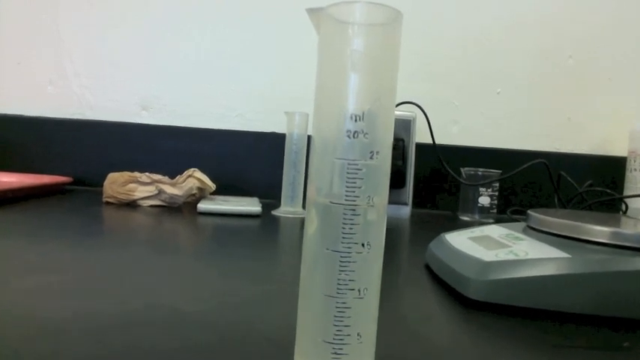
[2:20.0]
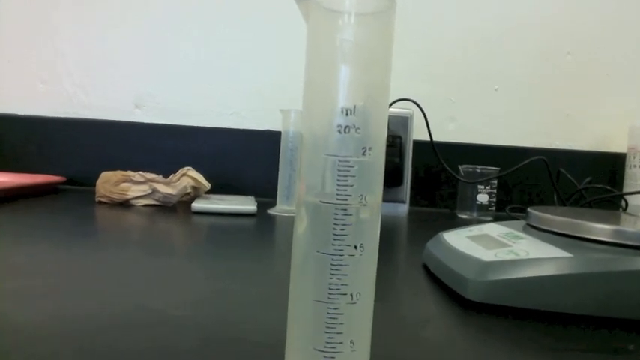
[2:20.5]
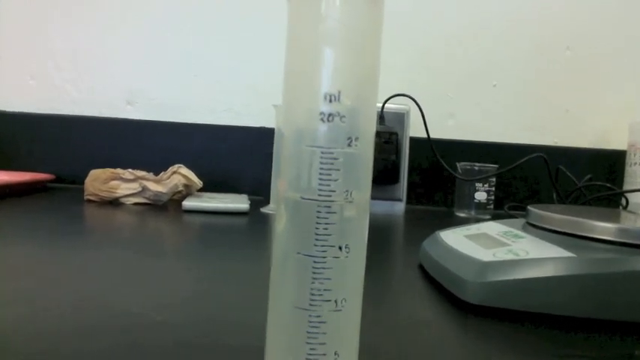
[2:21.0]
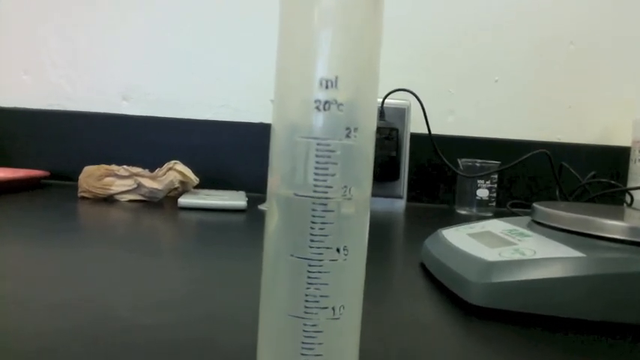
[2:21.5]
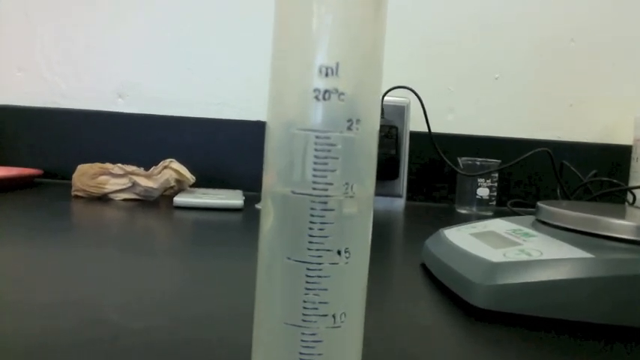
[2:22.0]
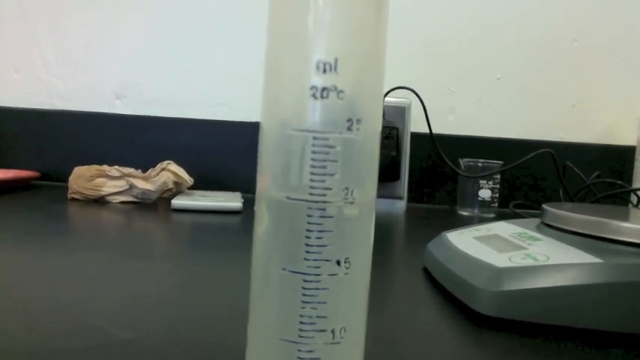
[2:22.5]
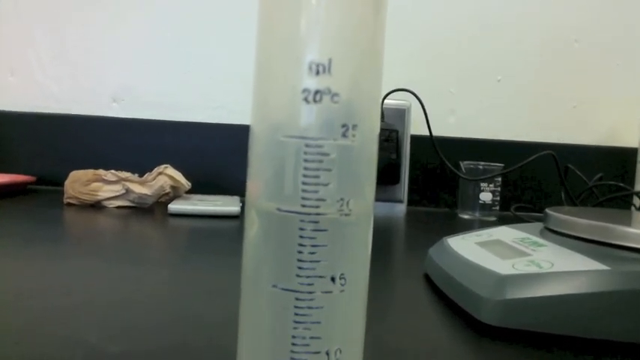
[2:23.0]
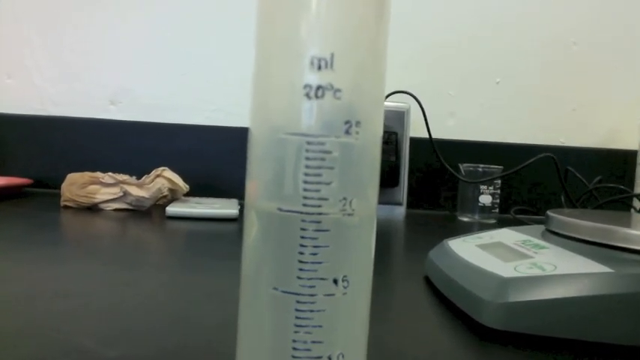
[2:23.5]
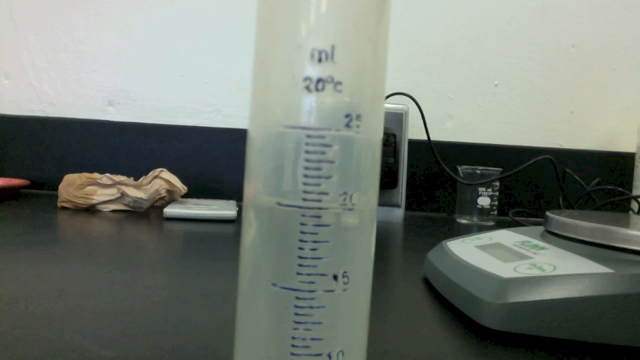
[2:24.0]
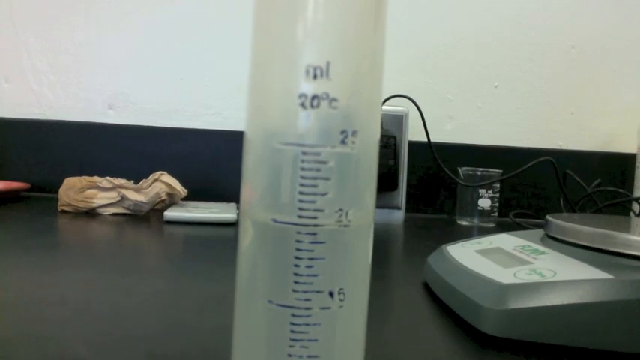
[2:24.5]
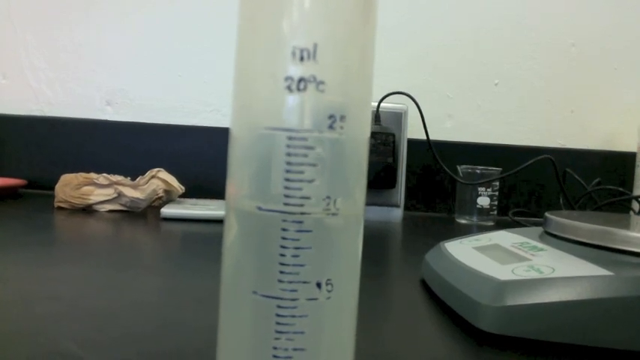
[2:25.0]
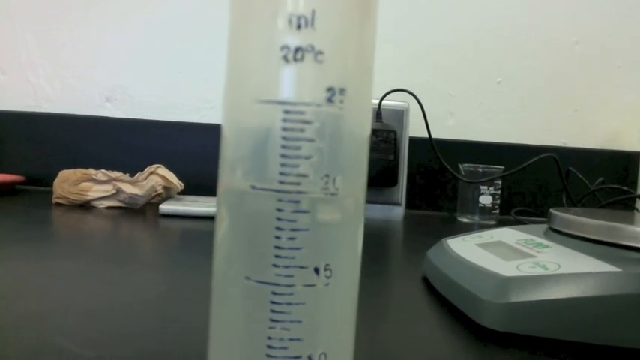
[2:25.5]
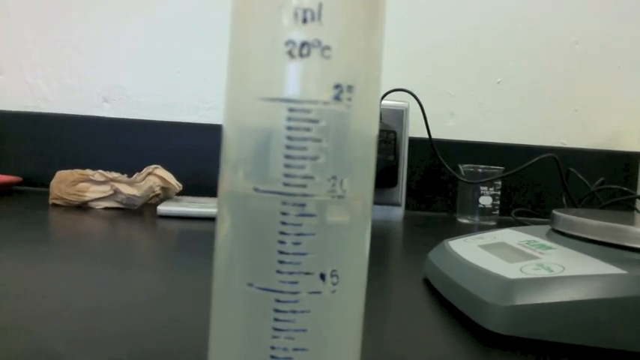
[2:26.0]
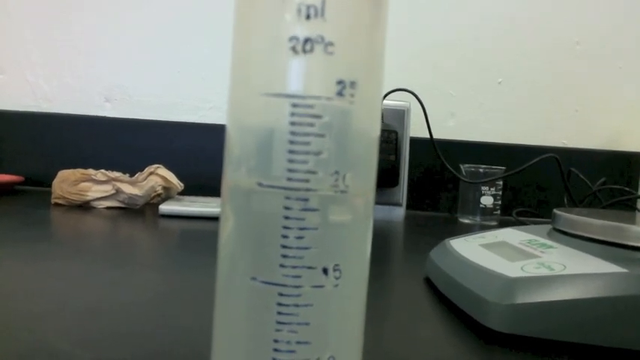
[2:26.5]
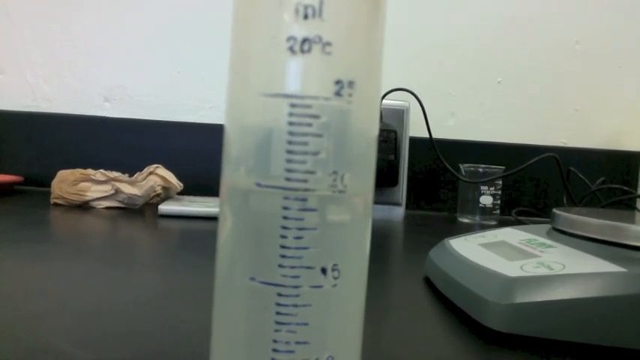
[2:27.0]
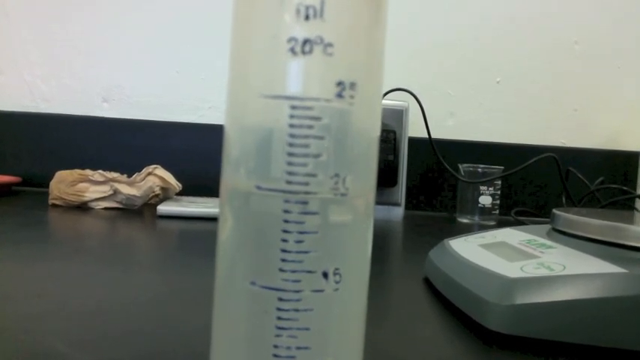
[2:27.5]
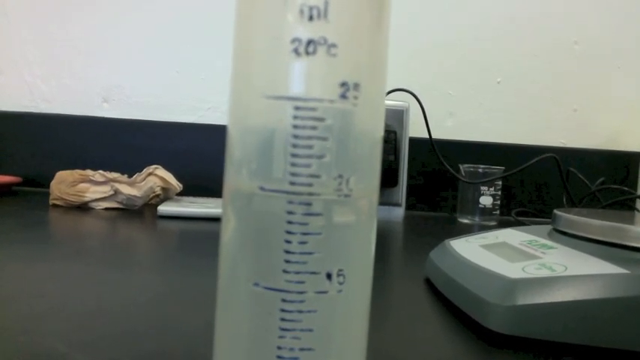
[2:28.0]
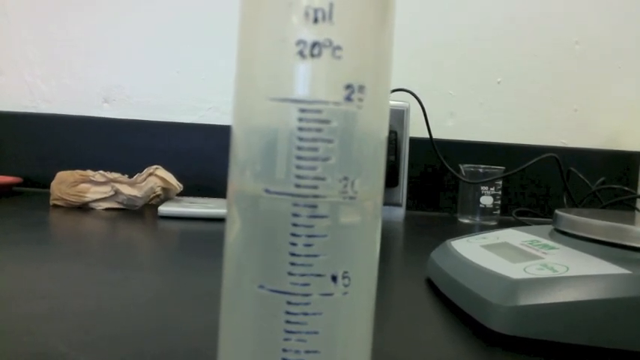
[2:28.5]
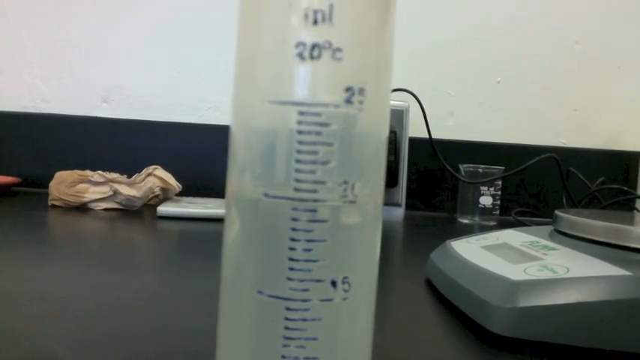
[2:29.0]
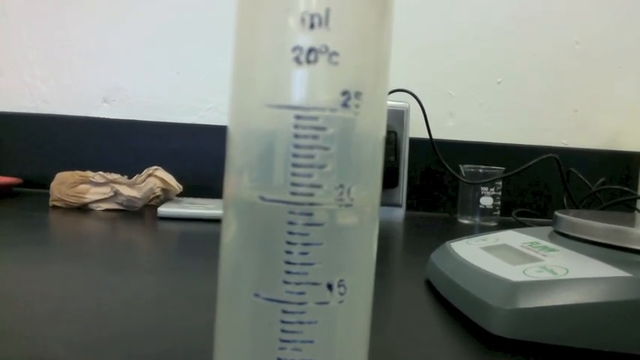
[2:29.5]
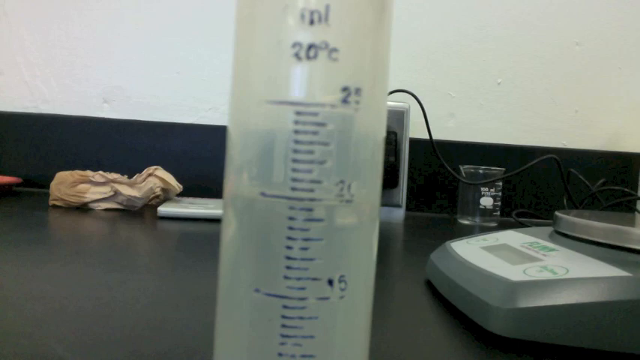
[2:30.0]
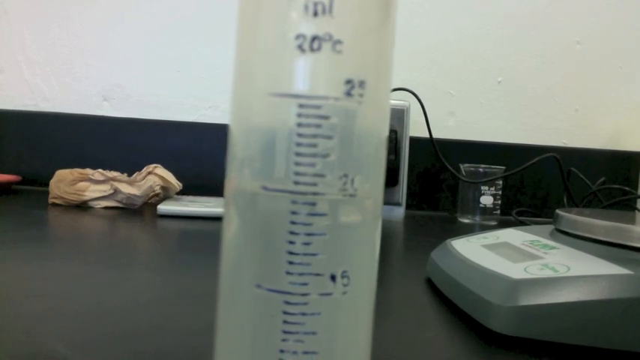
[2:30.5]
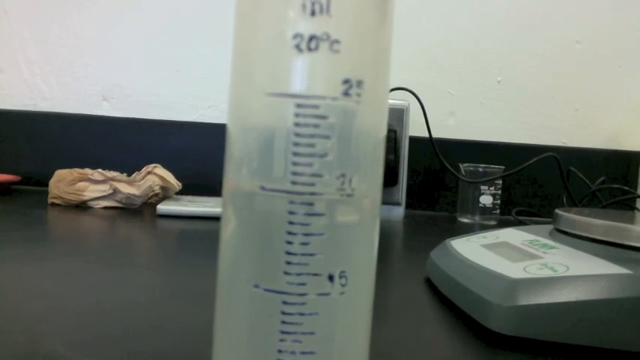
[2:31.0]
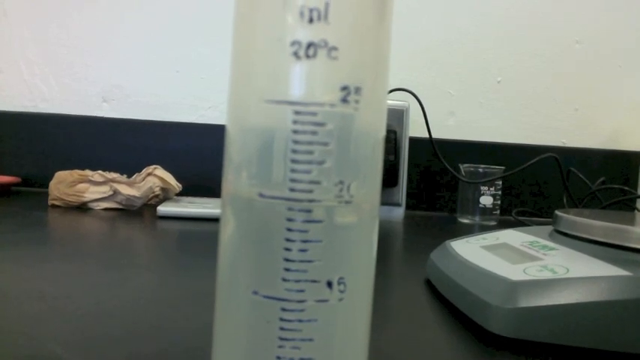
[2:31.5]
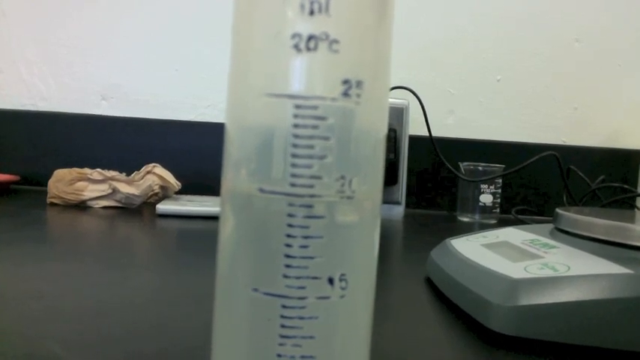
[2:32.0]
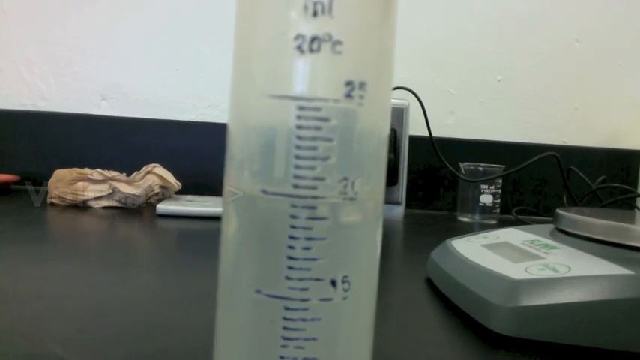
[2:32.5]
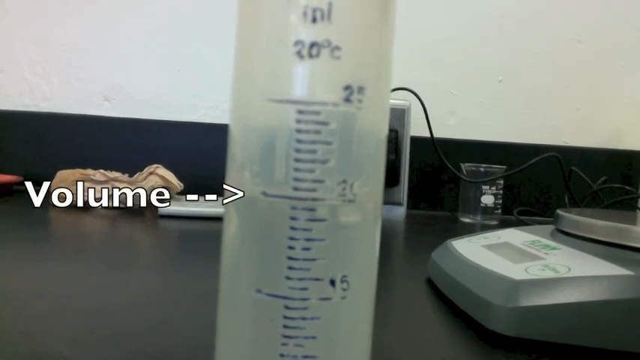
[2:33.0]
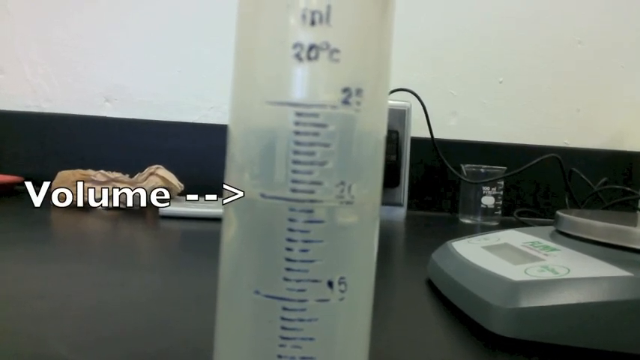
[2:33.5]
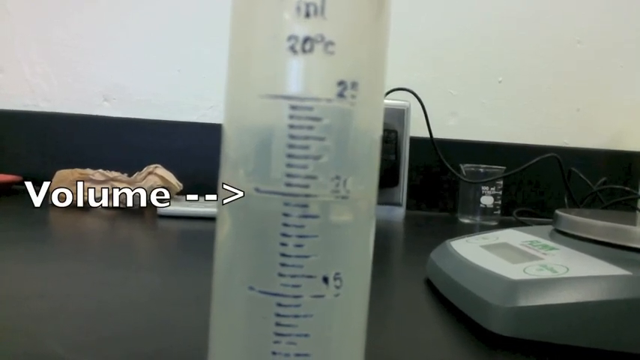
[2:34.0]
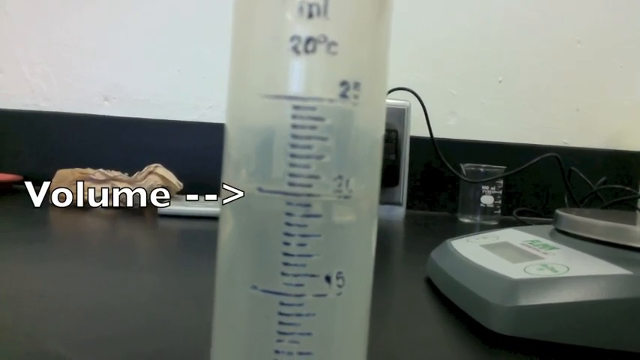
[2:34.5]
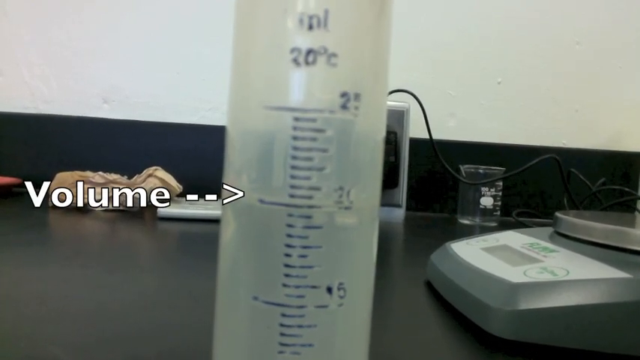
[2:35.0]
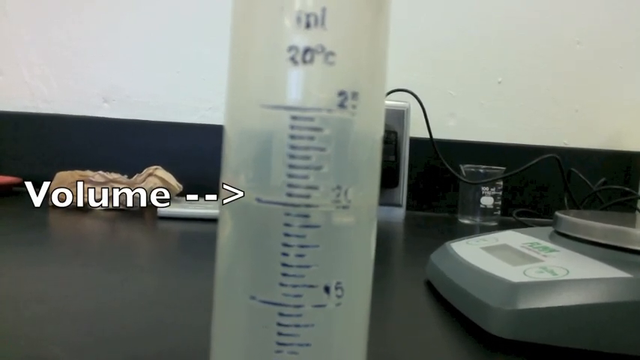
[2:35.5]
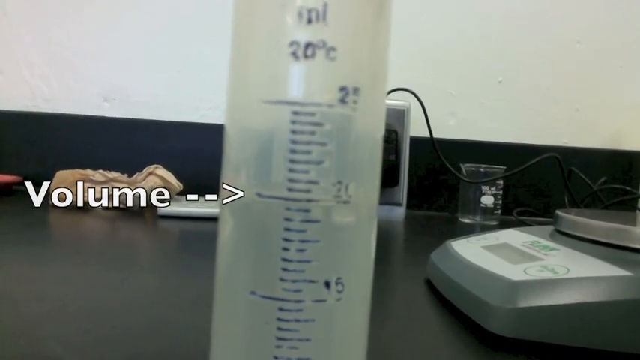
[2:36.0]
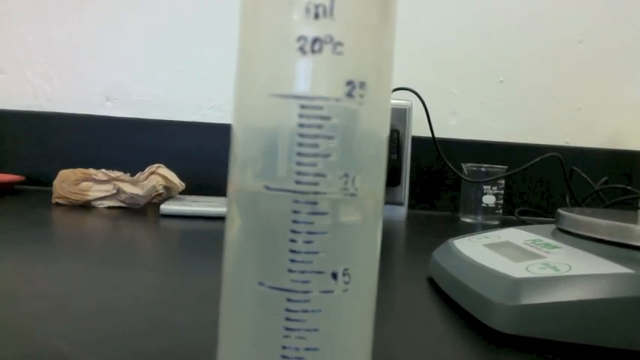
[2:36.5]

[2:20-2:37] A tall, slightly see-through plastic cylinder is on a black table, with a white wall in the background. On the right side of the screen is a scale pointing toward the left, with a black cord coming out of it that is plugged into the wall in the background. Another beaker just like the one in the foreground is next to the wall in the back, apparently on the left side of the screen, and to the left of that beaker is a brown paper bag. The camera zooms in and shows the milliliter markings, but the numbers cannot be made out because they are kind of worn off. Everything on the beaker is written in blue. The word "volume" appears on the left side of the beaker with an arrow pointing to where the water is, and then the arrow disappears.